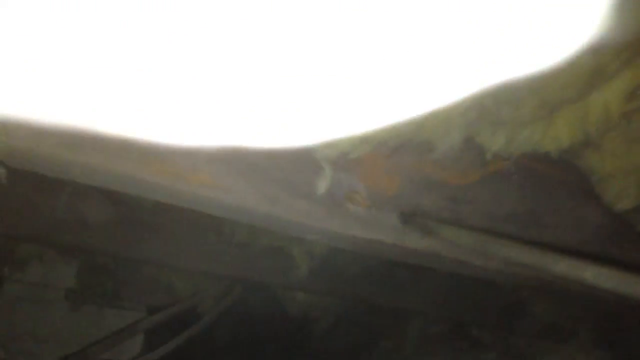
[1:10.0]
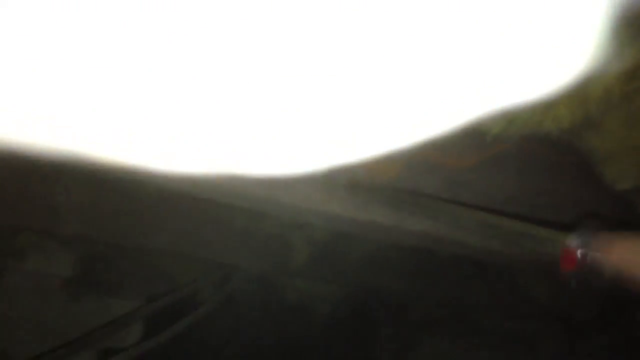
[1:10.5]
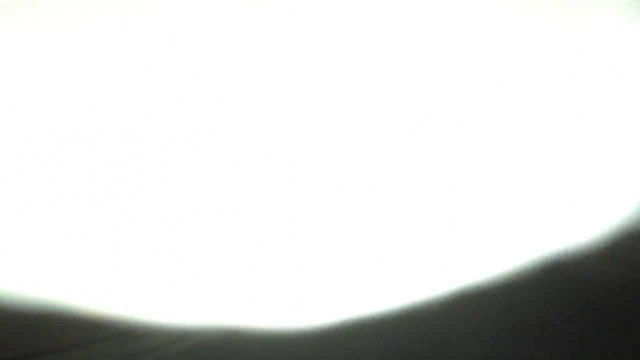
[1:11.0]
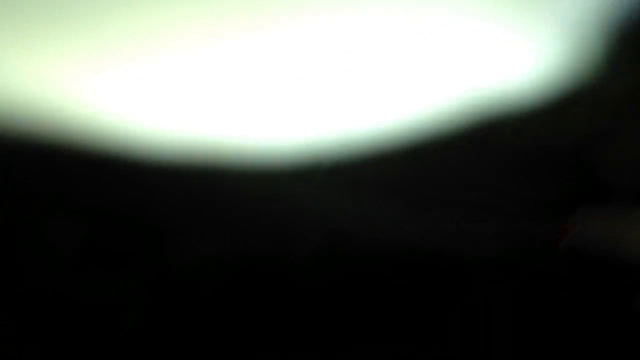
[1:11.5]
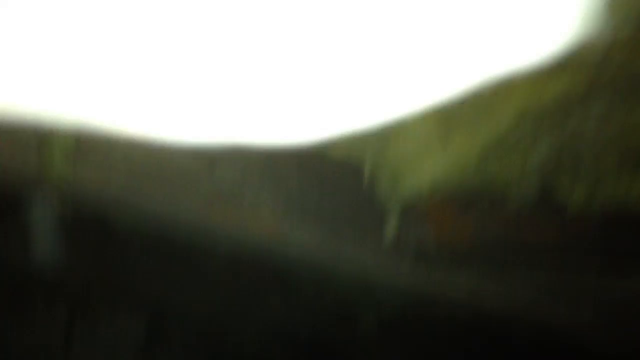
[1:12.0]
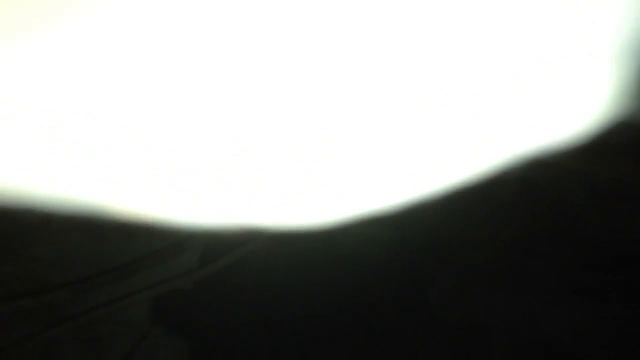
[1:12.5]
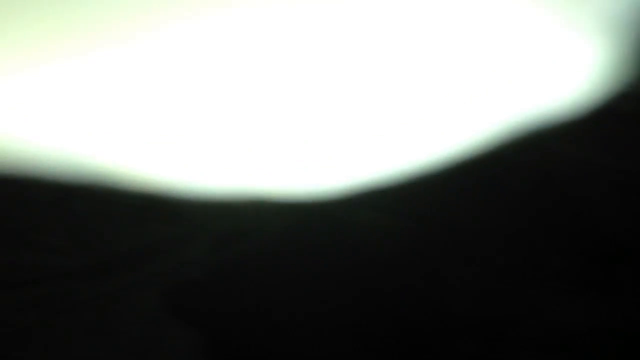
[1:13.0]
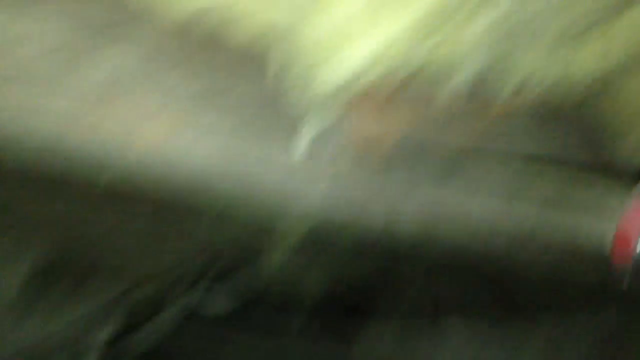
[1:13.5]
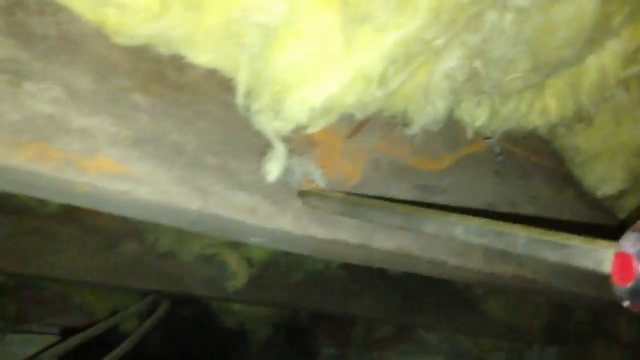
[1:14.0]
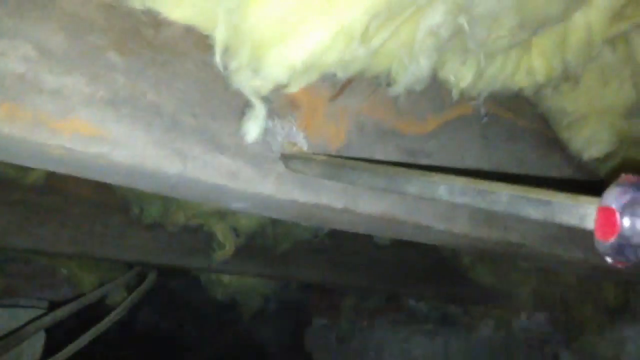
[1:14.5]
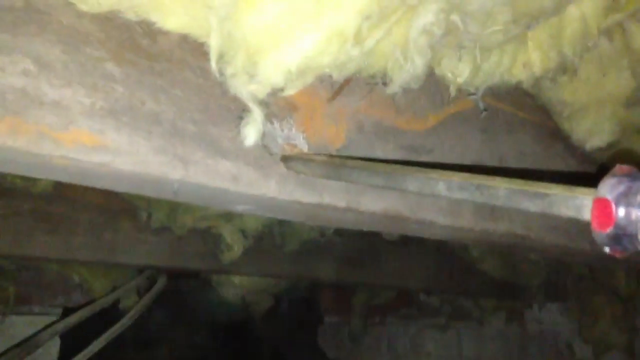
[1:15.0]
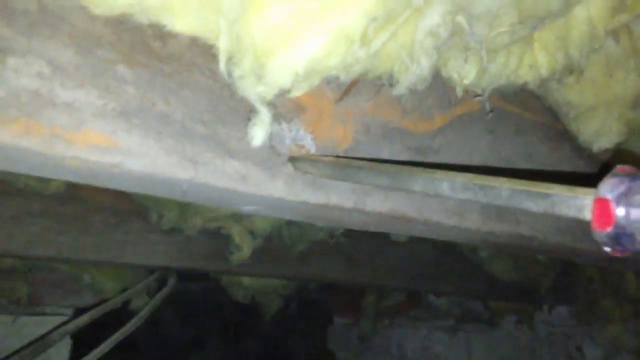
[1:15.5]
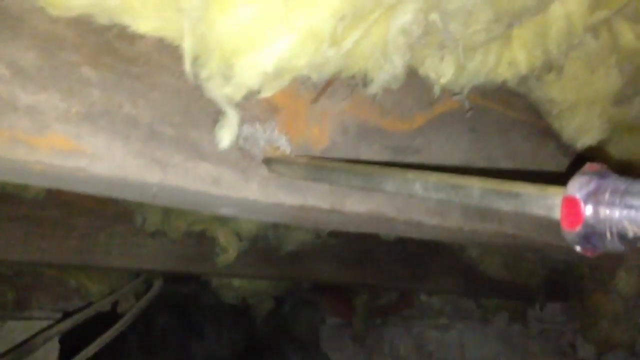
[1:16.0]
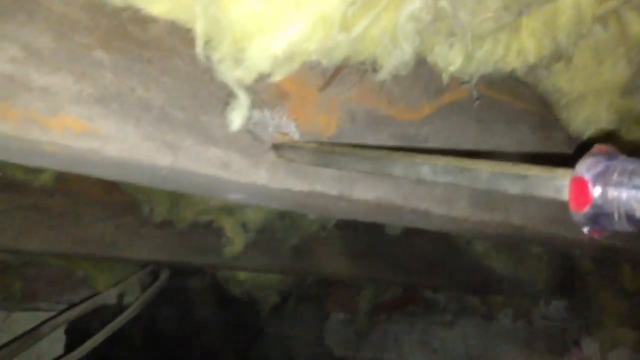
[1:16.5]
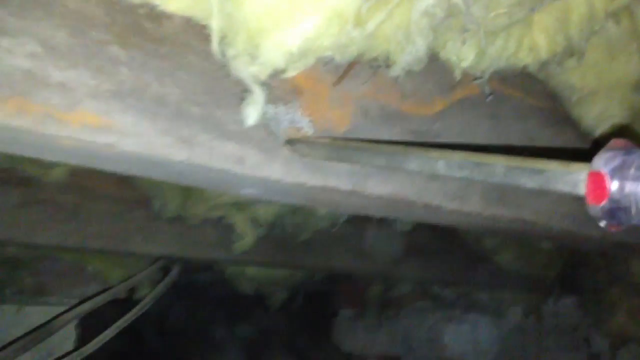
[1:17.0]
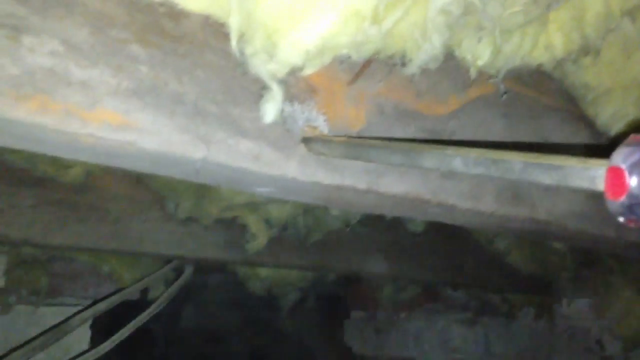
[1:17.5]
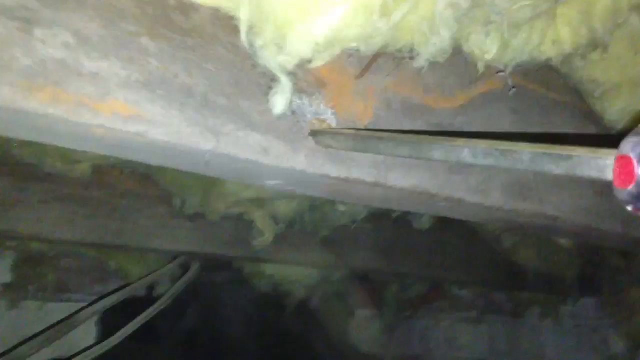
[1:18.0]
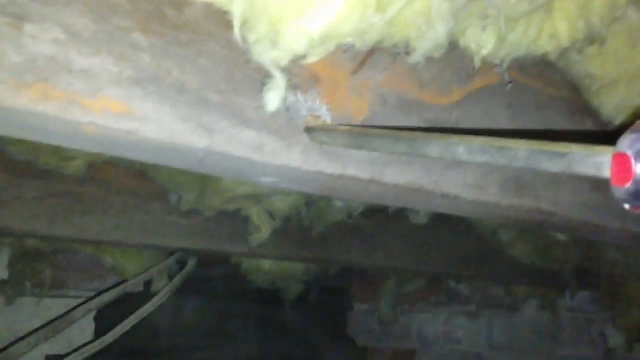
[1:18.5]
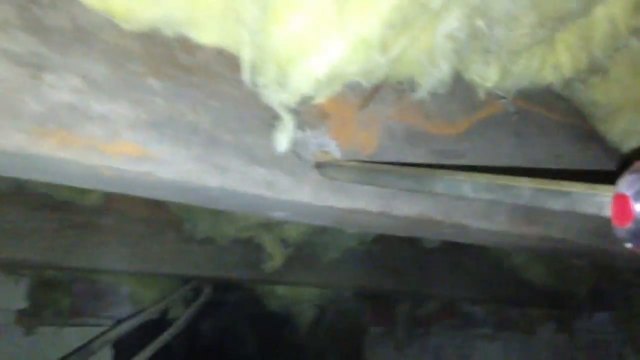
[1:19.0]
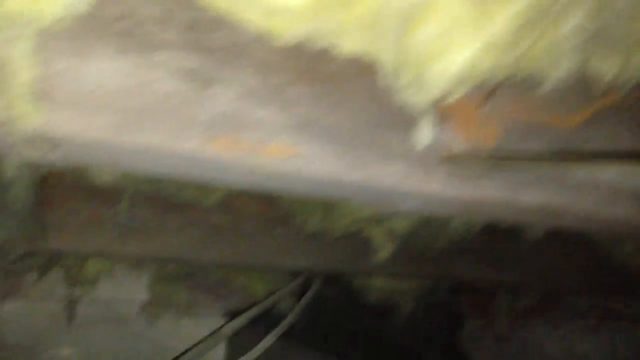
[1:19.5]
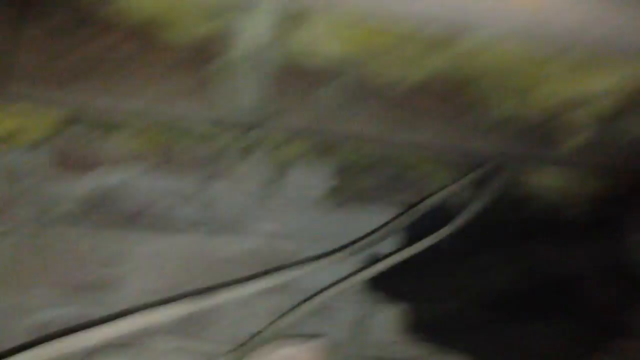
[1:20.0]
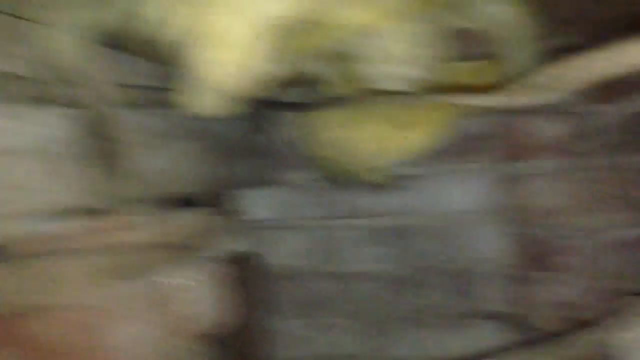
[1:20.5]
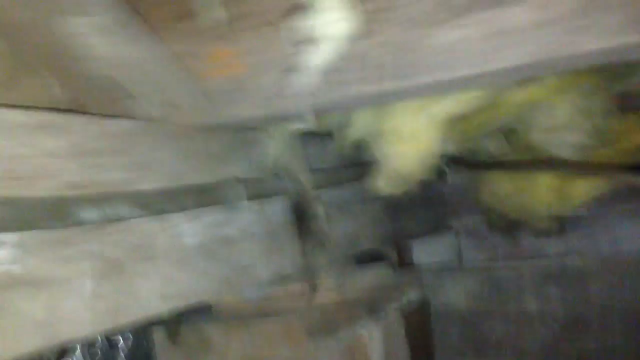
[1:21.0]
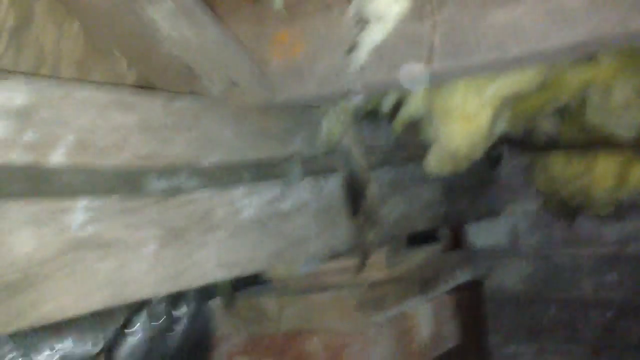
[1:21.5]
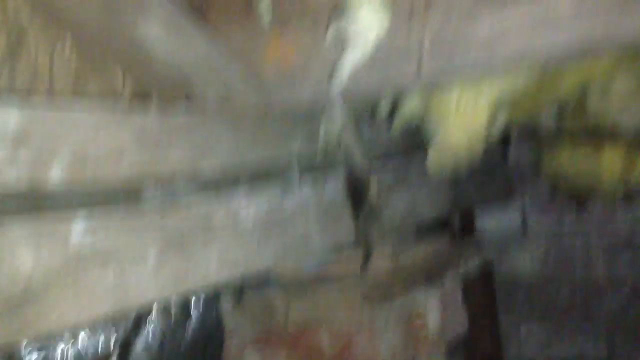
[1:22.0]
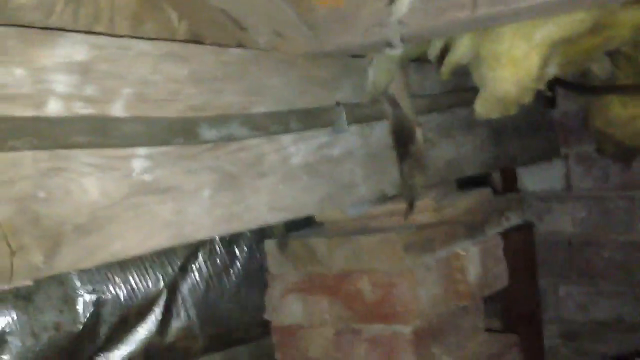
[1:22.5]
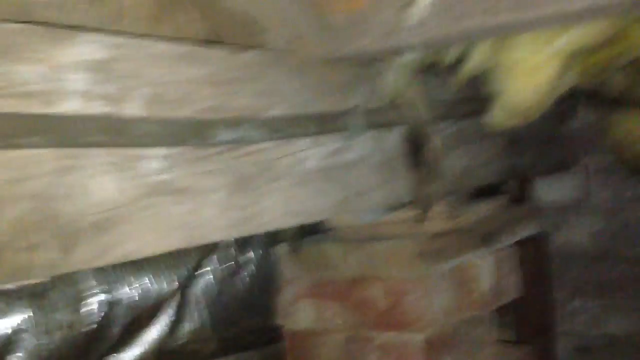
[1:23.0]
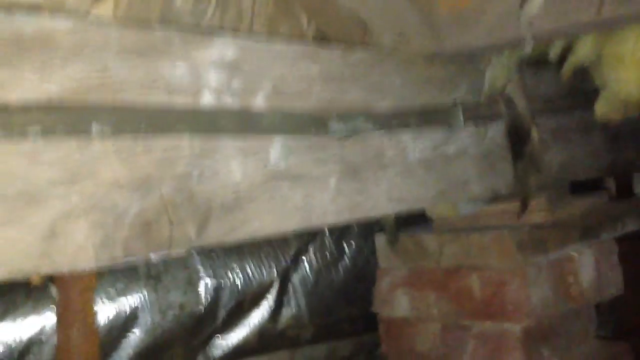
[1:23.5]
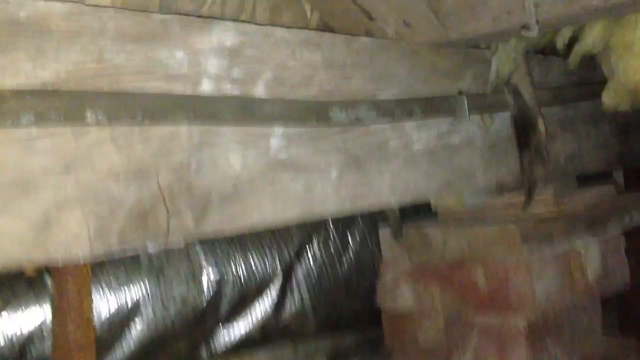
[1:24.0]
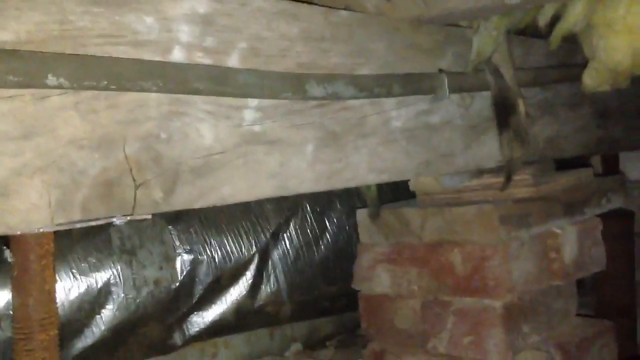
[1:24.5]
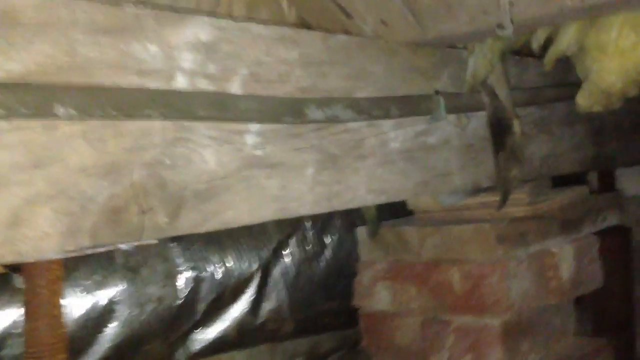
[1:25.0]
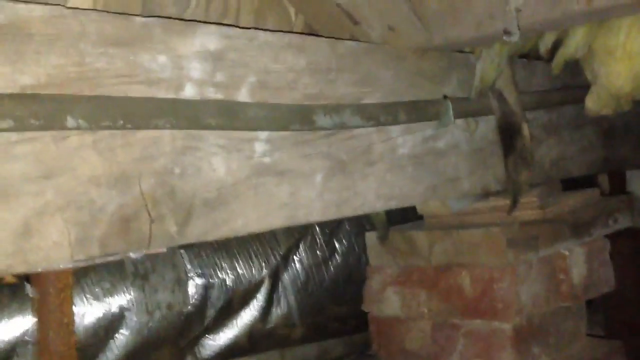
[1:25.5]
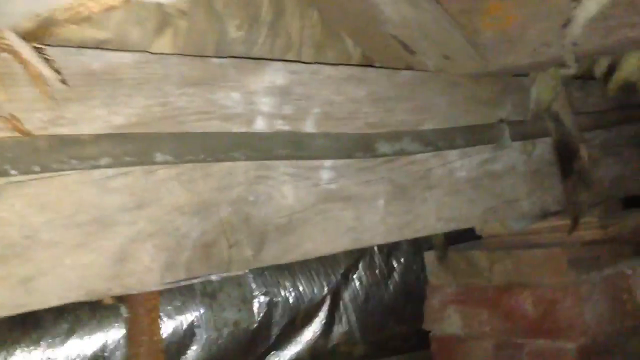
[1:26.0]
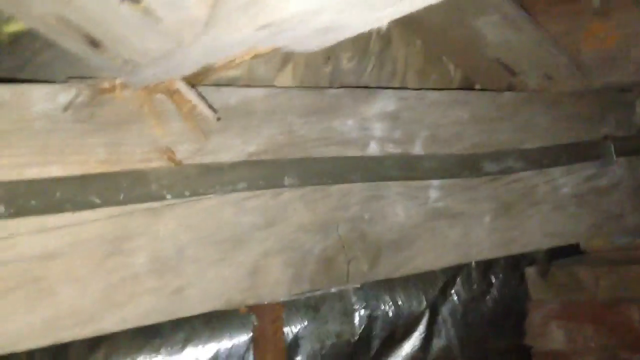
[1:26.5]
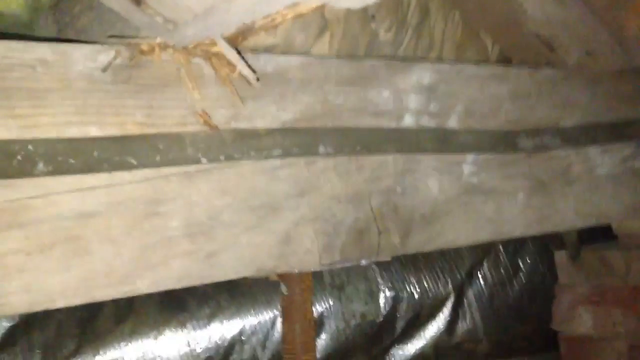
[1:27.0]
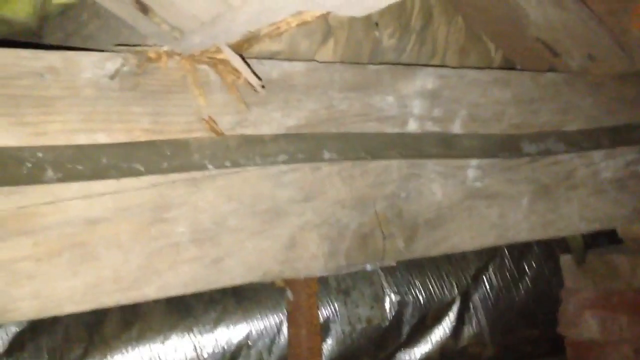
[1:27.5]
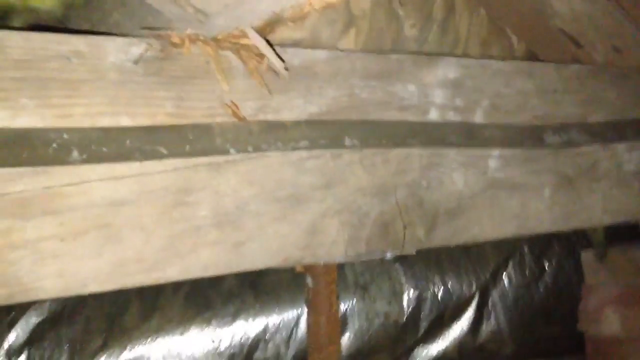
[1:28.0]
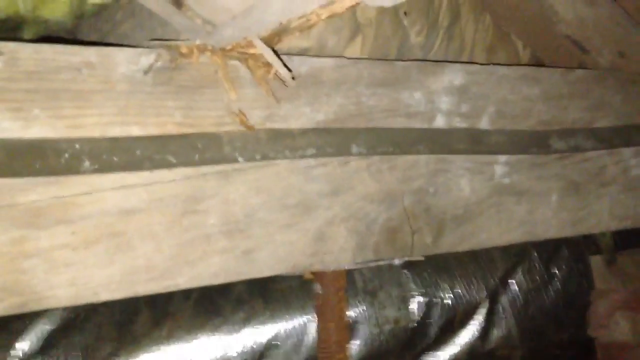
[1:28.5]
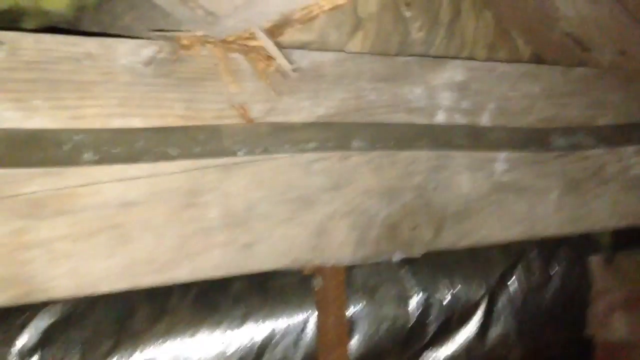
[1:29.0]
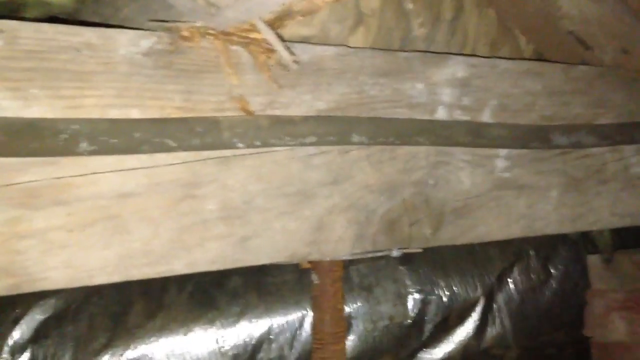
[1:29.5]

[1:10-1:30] A big light comes in about halfway down the left side, going across to the right and angling up before the right side, with a little asbestos to the right of it and wood in the background coming in from the right near the bottom. A black crowbar angles up, tapping and poking on the wood. It kind of moves up too far and the light gets in the way, then moves down fast so the light is just at the top, covering most of the asbestos. Once the light is gone, the tool is visible poking the wood, with a little of the glove on the right side. He holds it on the wood at one point; it is actually a screwdriver, stabbed into the wood. He pans back over to the left to the stack of bricks holding up the wood structure, and a little more to the left to where he chipped off the piece above the jack. A splintery part sticks down from the top and from the sides where he flaked off the piece, about half of the wood across, and the rusty jack is underneath where he scraped it off.